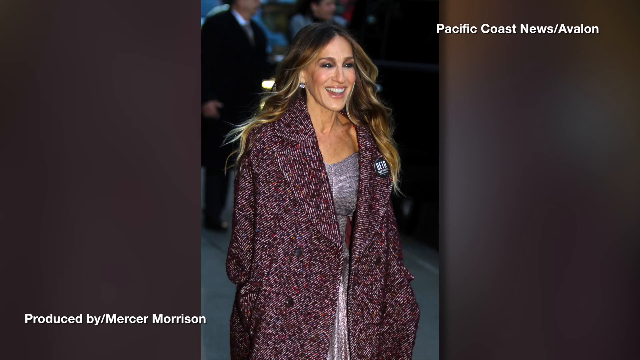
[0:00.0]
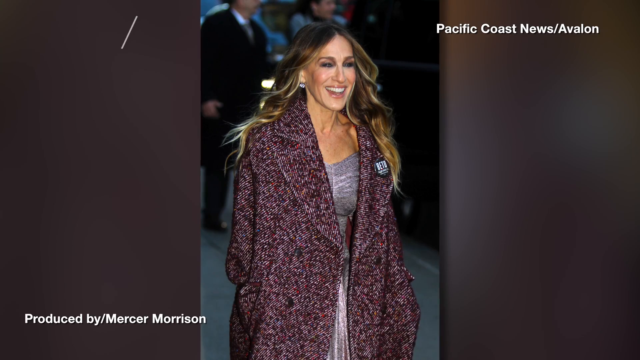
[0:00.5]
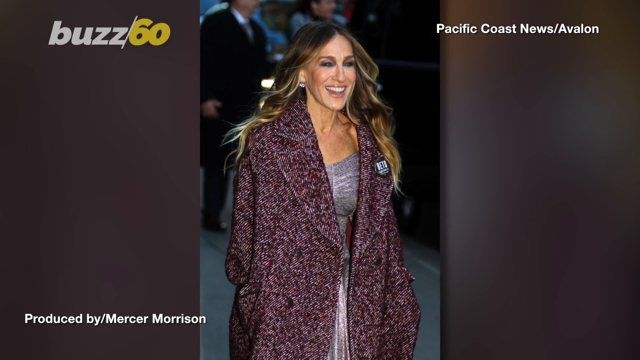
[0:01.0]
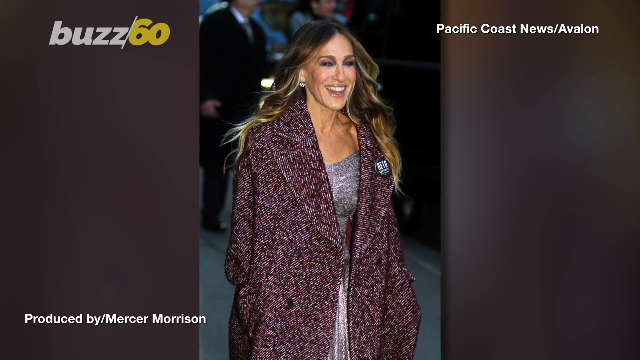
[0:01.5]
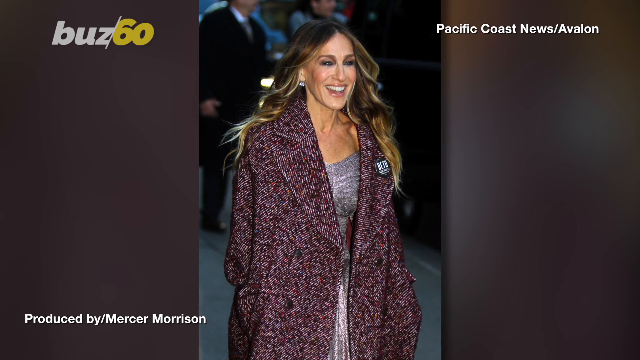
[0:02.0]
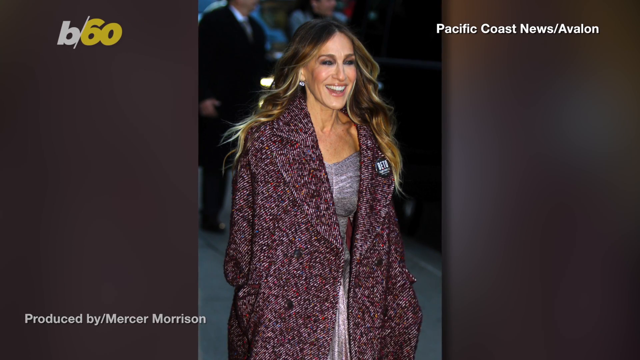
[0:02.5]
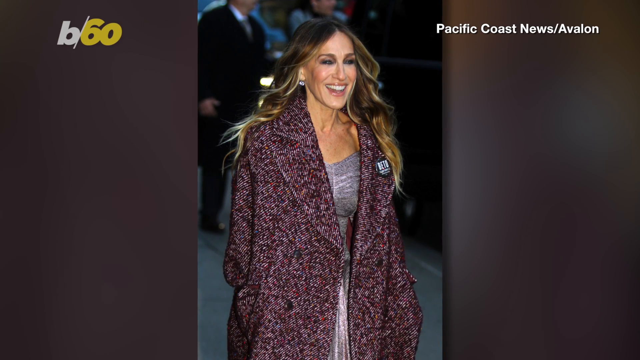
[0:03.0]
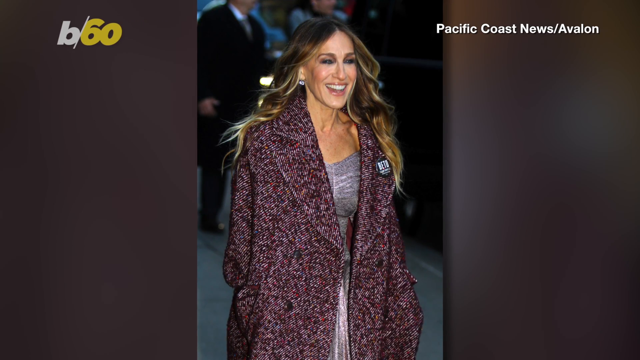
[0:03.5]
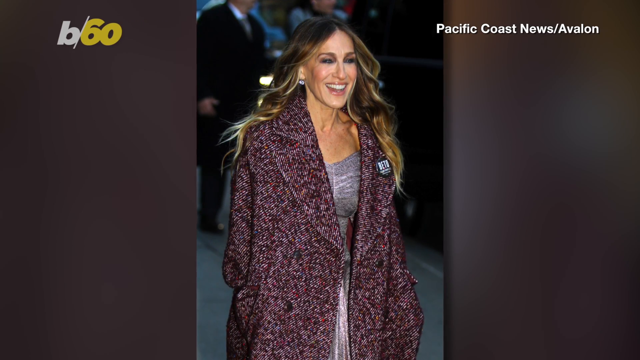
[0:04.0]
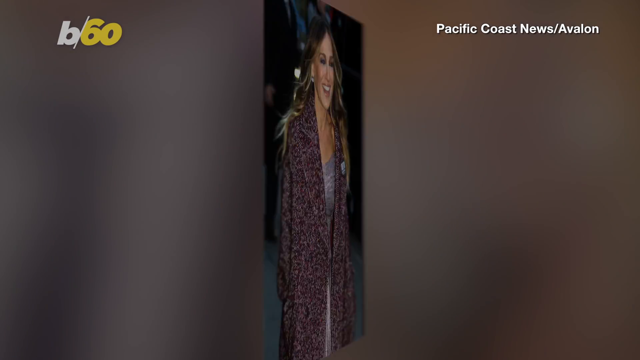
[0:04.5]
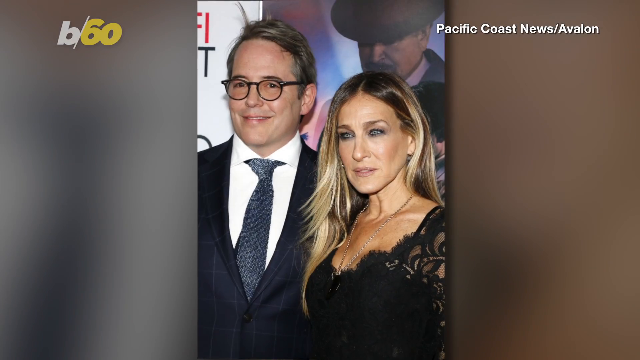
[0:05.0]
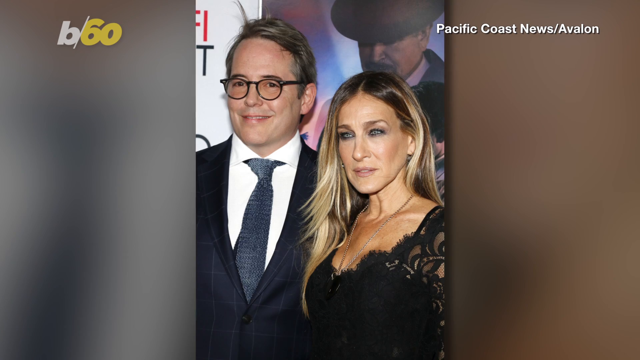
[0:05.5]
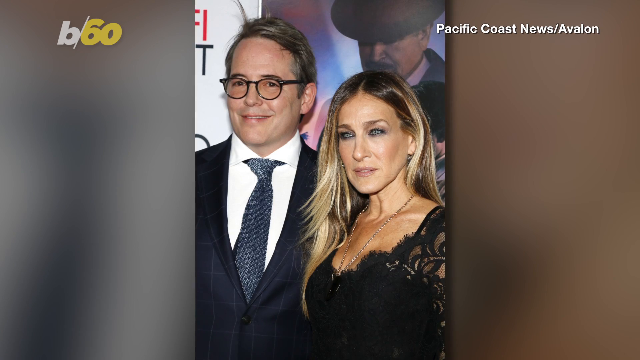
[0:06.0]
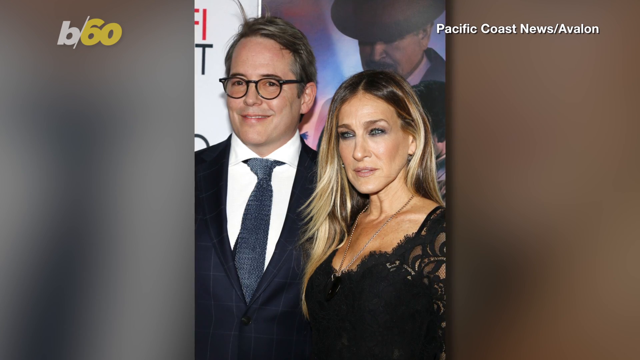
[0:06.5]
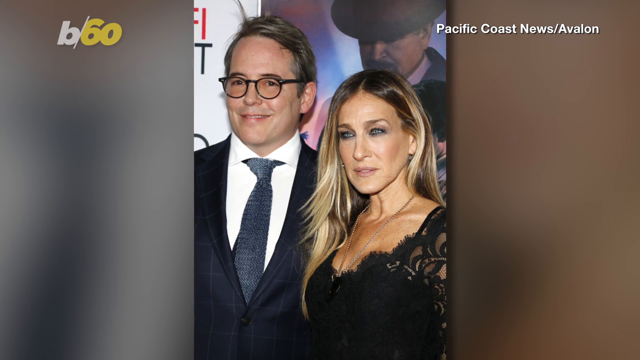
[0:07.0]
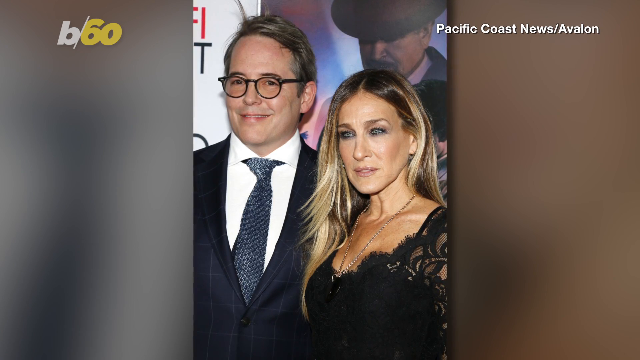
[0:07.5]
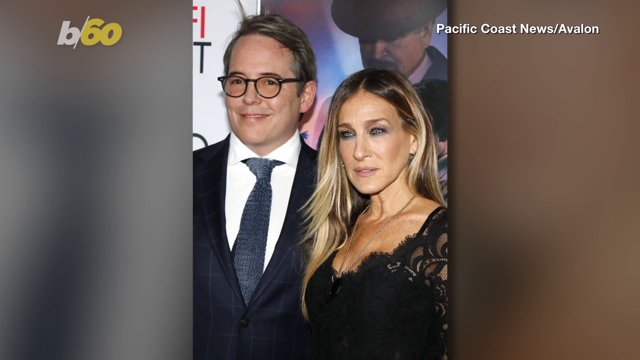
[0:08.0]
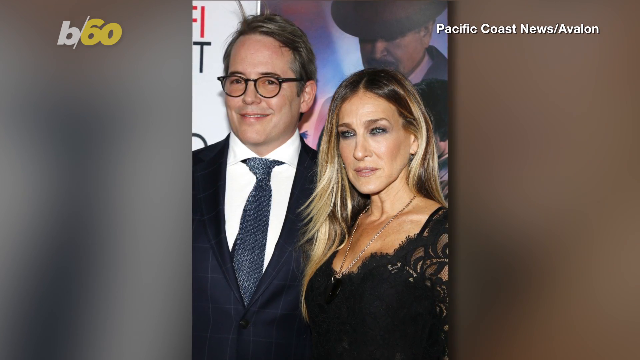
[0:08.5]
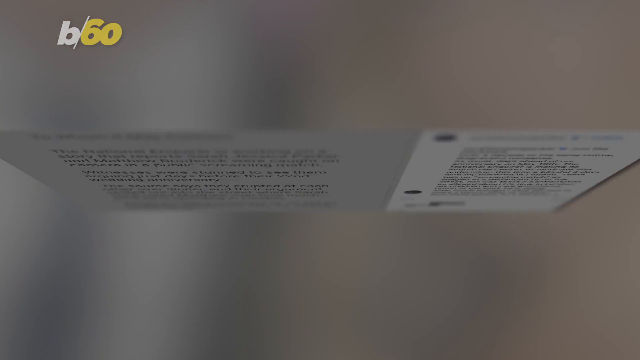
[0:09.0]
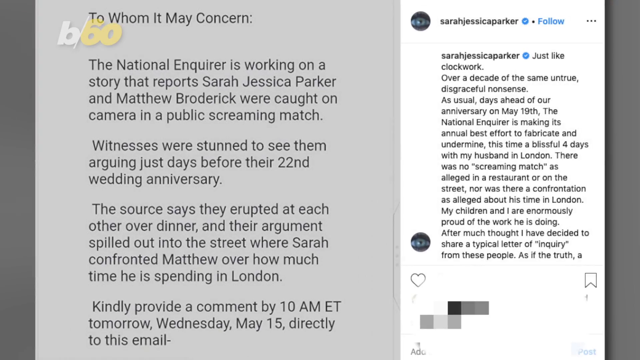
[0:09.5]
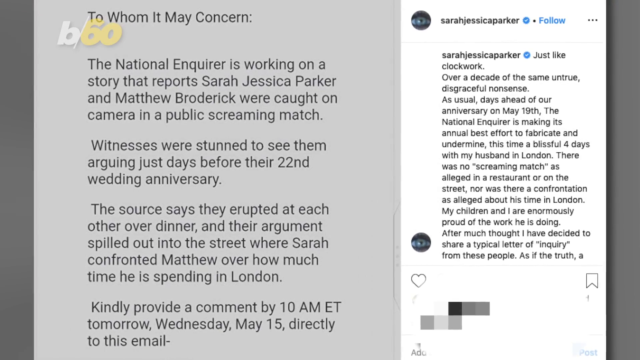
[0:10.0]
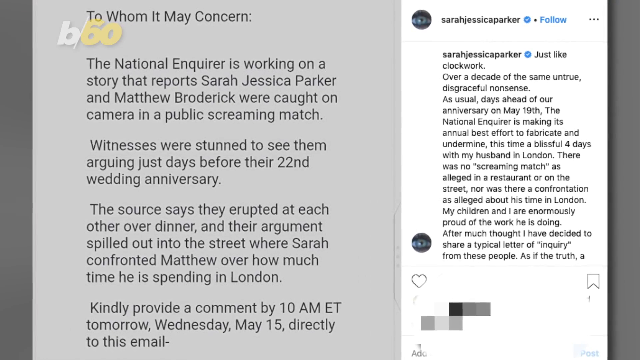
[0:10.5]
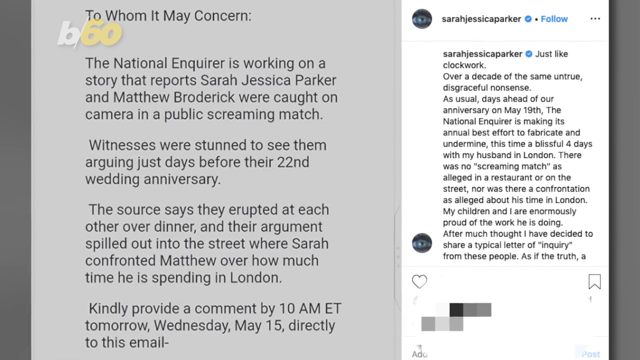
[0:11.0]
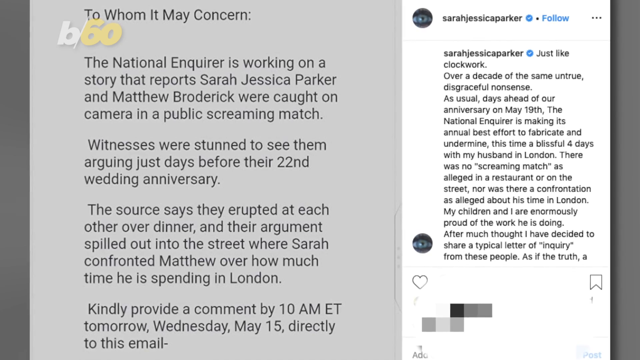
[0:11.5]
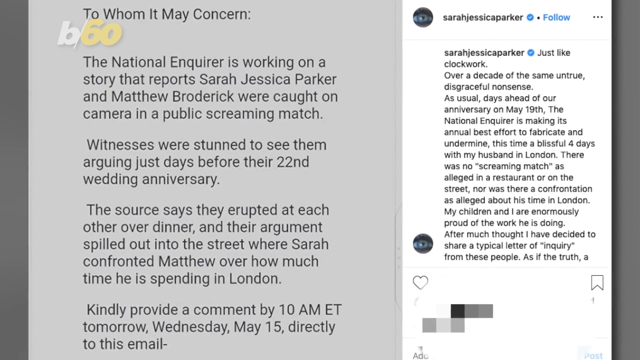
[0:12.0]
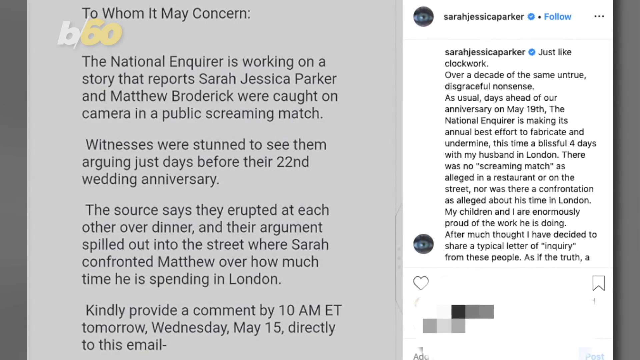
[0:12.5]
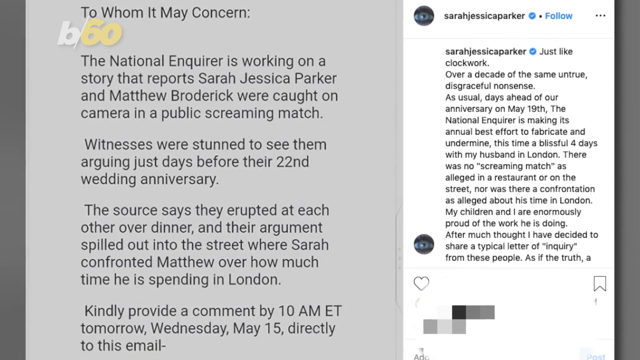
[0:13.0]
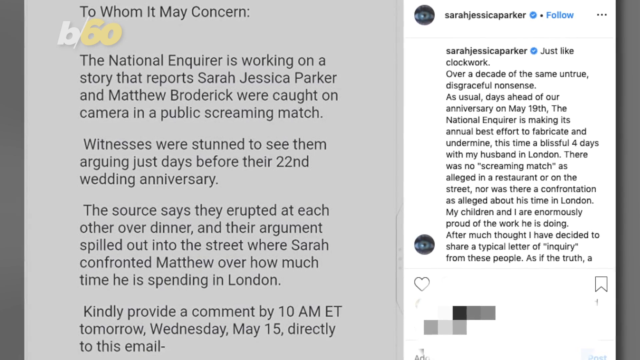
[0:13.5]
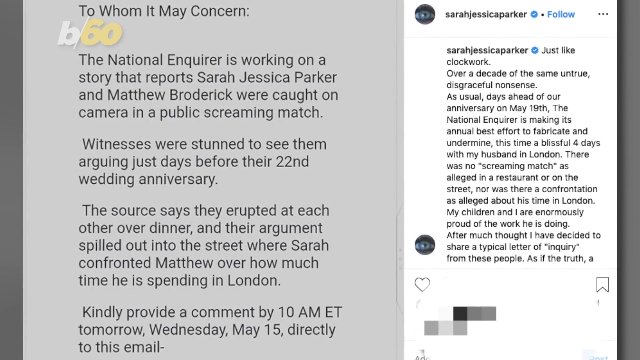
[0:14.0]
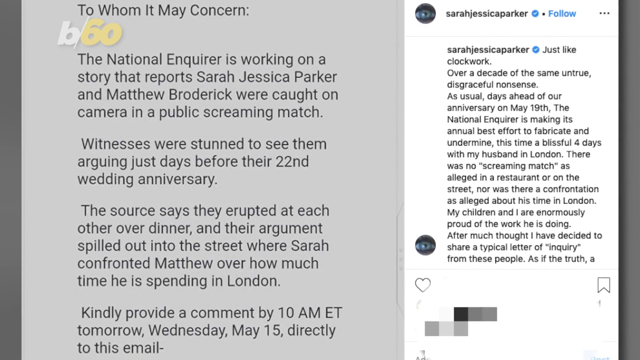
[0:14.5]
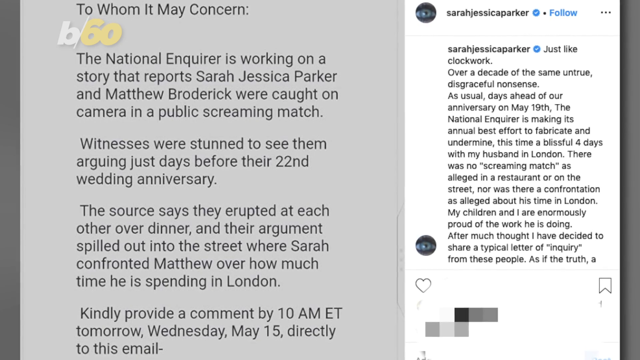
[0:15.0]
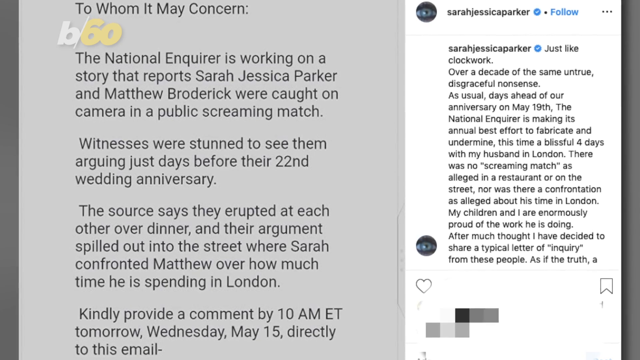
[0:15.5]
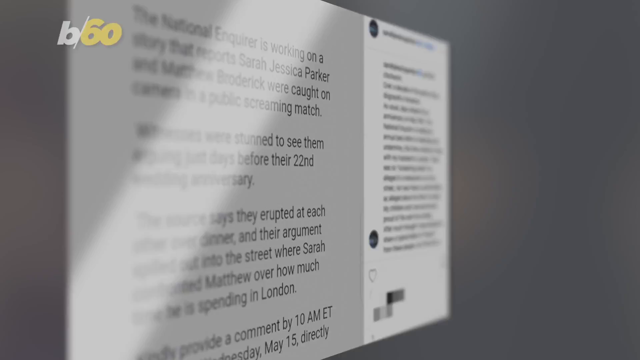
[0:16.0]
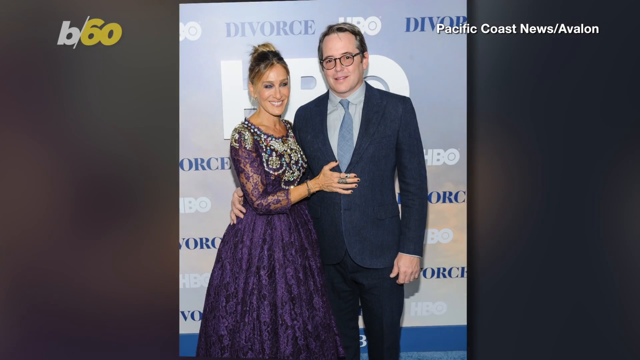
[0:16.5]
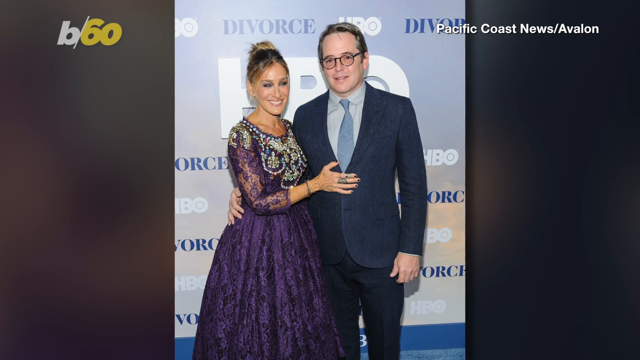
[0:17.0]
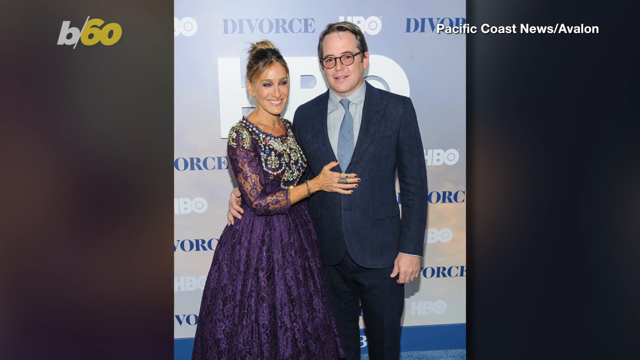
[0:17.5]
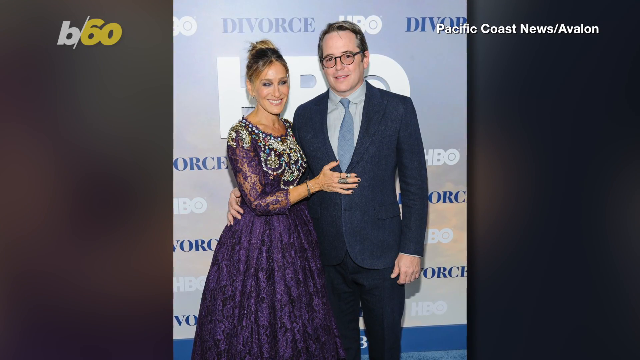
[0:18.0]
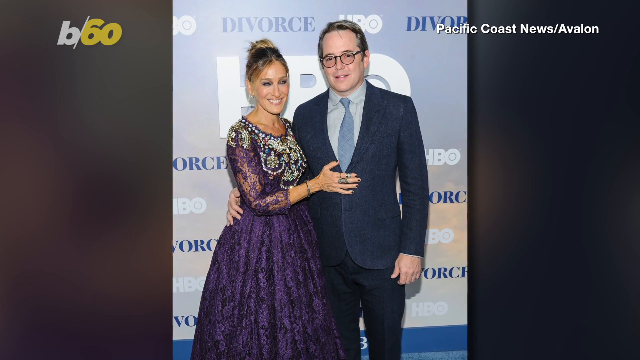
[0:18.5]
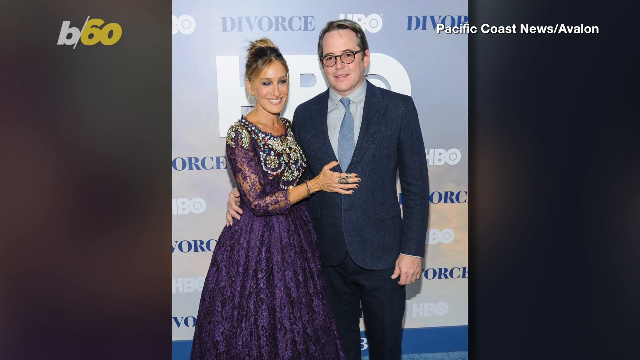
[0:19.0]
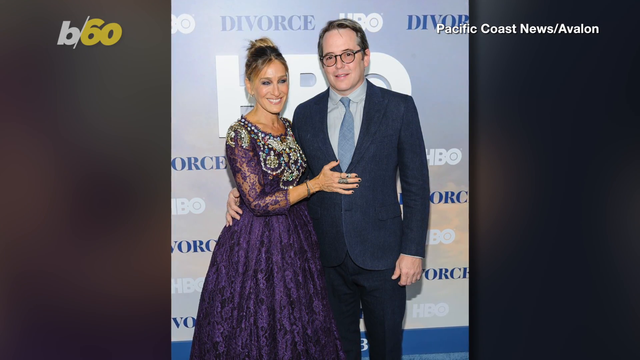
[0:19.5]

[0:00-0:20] The video opens on an image of a person in portrait format, with a blurry background alongside it that appears to be a reflection of the portrait. In the top right is the text "Pacific Coast News". The woman is smiling and looking off to the right side of the camera. As the video starts, more text appears in the top left, which seems to be a logo for something called "Buzz 60": "Buzz" is in white text and "60" is in yellow. The "Buzz" then minimizes to display just "B", with a slash between the B and 60. The image rotates to show another image, apparently of the same woman standing next to a man. The woman seems to be looking off to the left of the camera, while the man looks directly at it. The man wears a suit and tie and brown glasses, and he appears to be middle-aged with gray hair. The woman wears a black dress. The image then does a flip animation to show what appears to be a news article, with a few paragraphs on the right side about an altercation between two celebrities and, also on the right side, a section of tweets. This image then flips to show another image of the same two people.